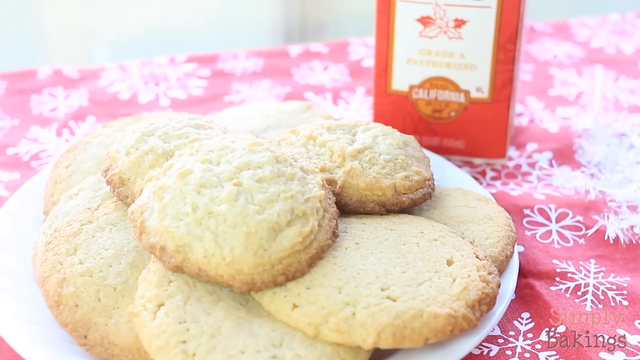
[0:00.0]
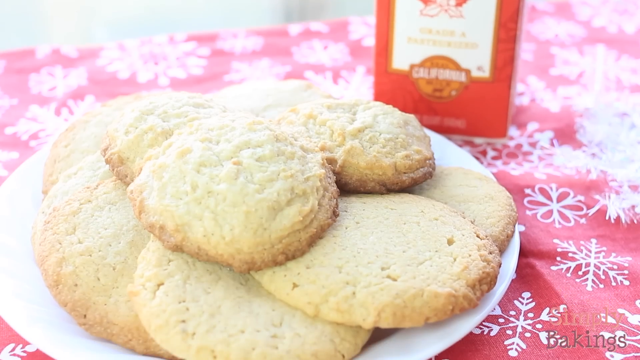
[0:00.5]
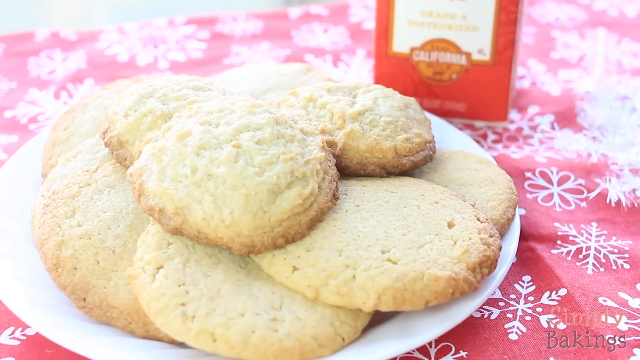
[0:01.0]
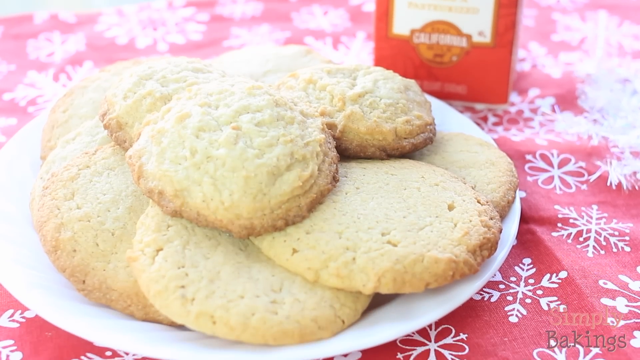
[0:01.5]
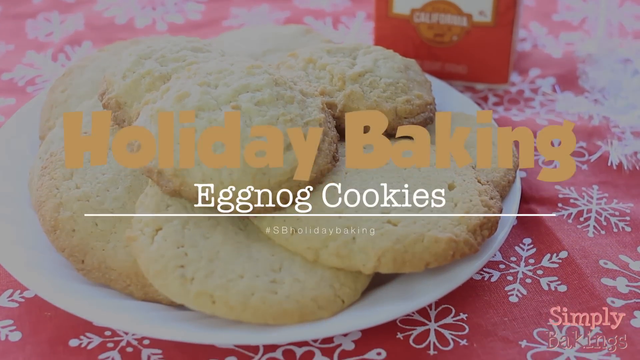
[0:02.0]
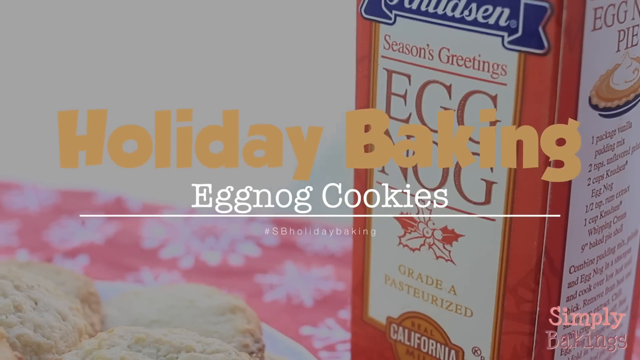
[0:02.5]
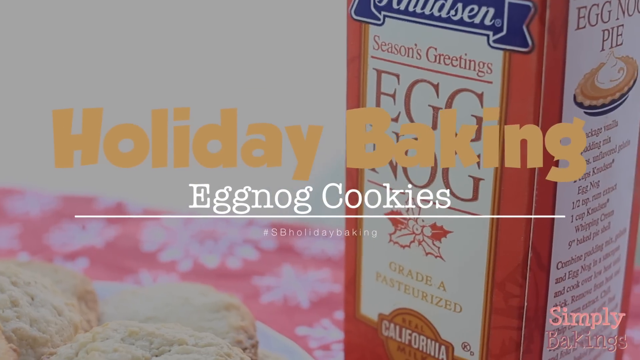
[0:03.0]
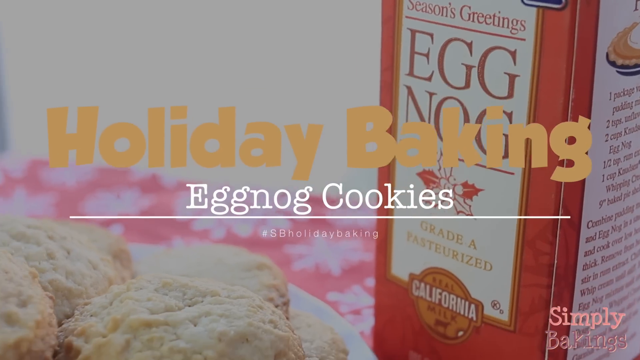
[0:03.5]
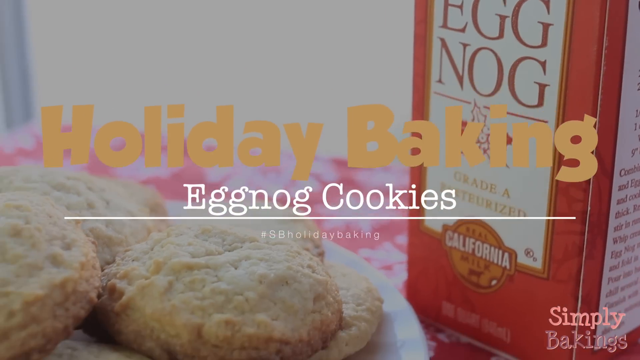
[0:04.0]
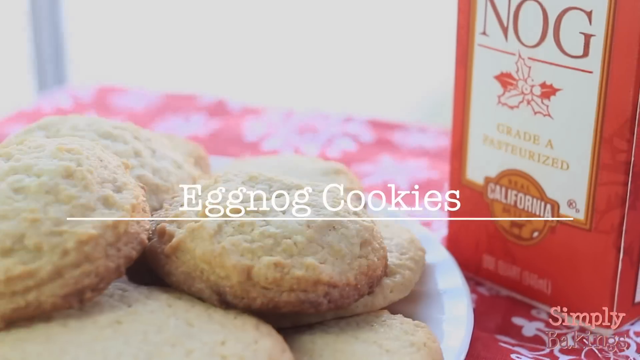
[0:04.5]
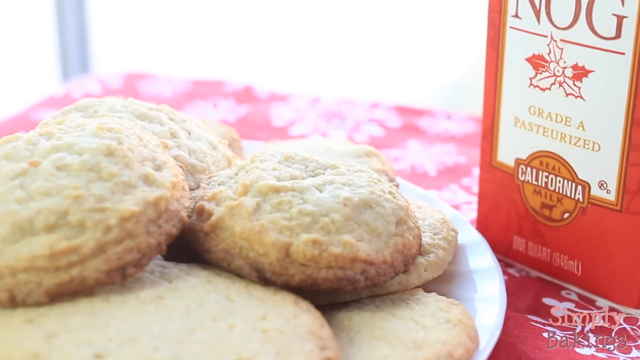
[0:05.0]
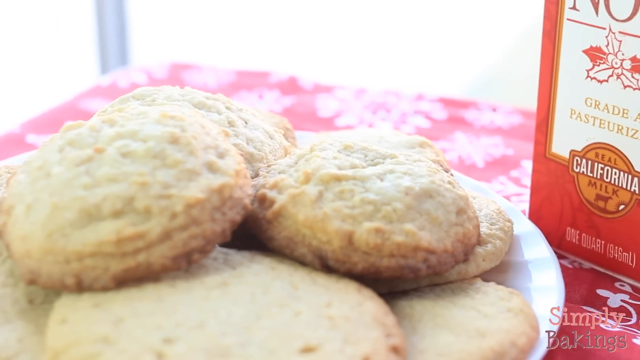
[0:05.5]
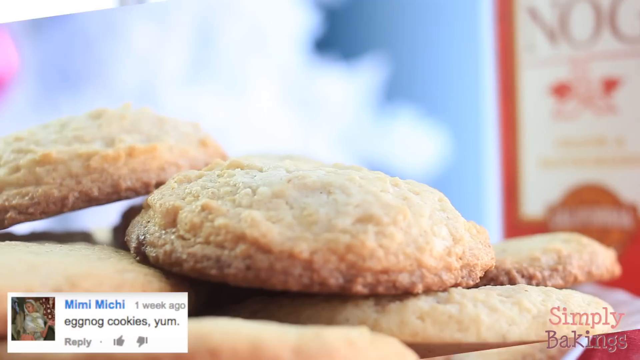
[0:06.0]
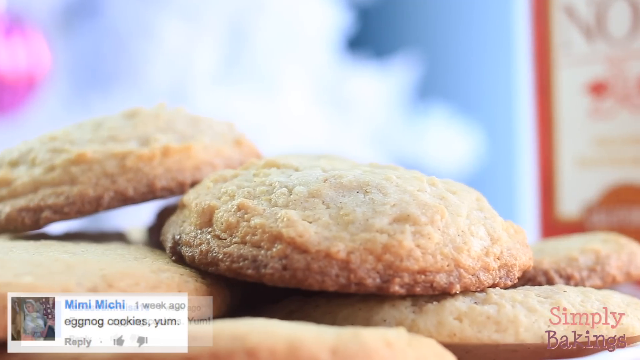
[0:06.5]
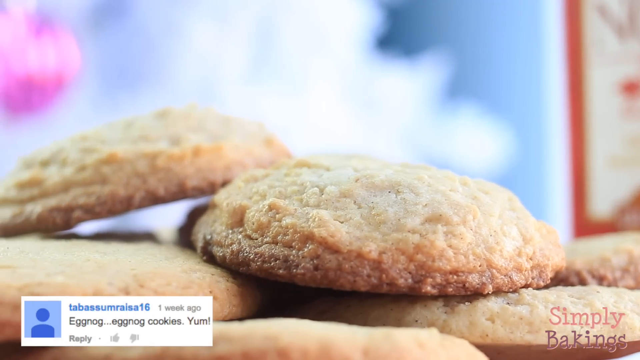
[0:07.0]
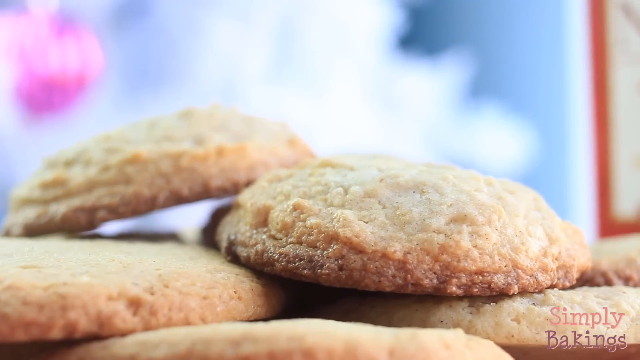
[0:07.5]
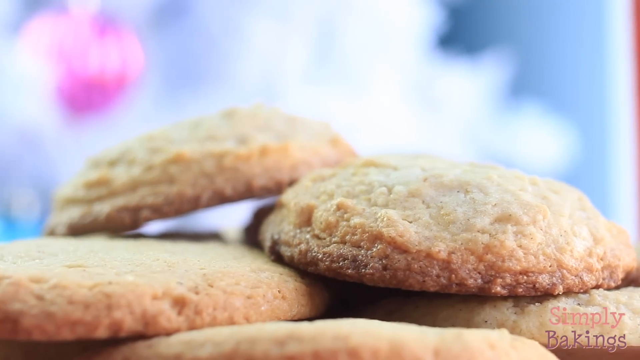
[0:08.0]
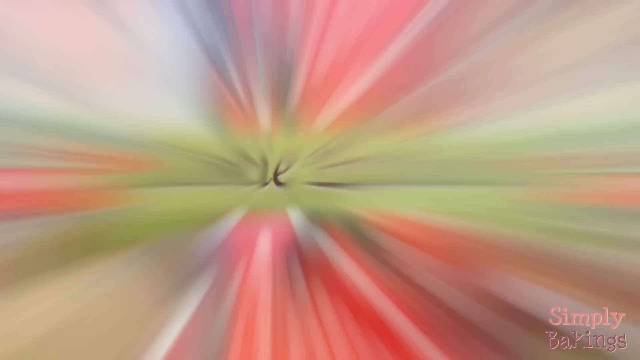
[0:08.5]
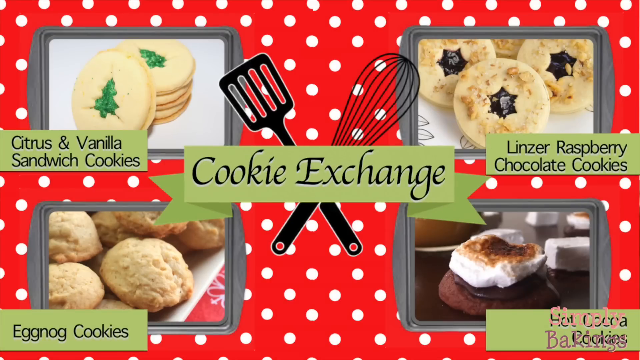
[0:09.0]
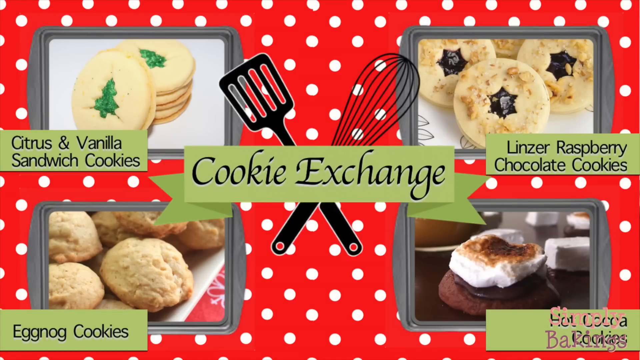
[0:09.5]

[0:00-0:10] A bunch of what look like plain sugar cookies are on a white plate, which is on a Christmas-themed cloth with white snowflakes on a red background. Right next to the cookies is what looks like a box of something to go with them. The cookies look not very soft; their texture seems a little crumbly, and they are very light in color. The item next to them is a square-shaped red and white box that apparently says "California" on it.